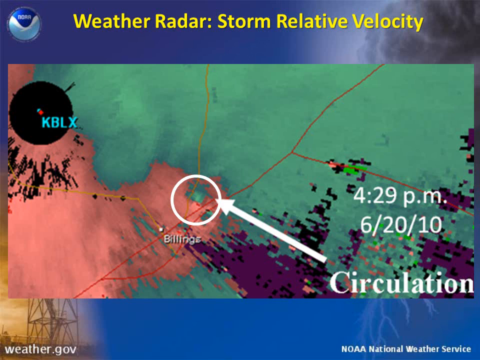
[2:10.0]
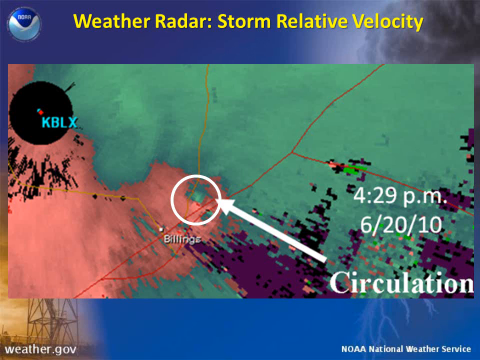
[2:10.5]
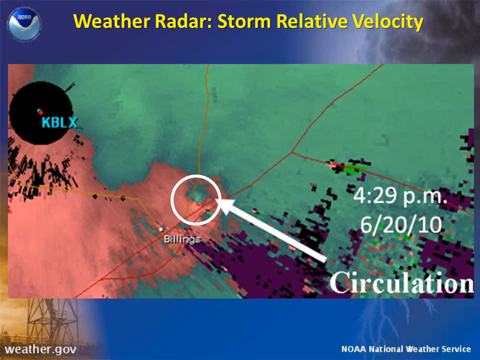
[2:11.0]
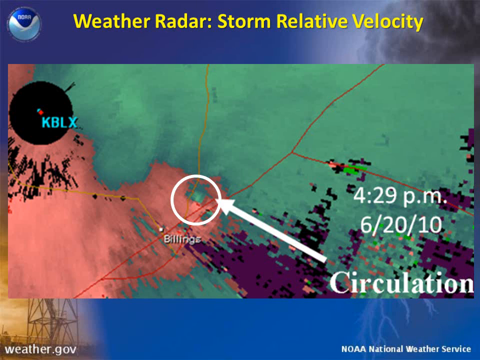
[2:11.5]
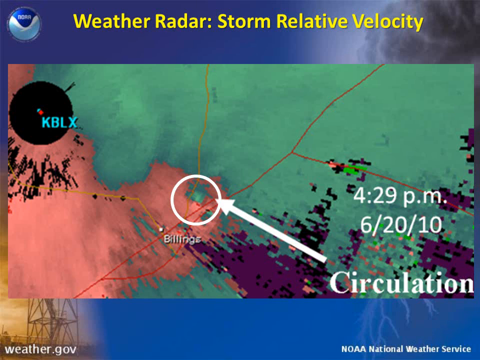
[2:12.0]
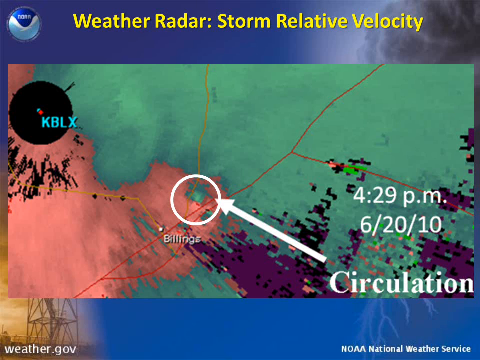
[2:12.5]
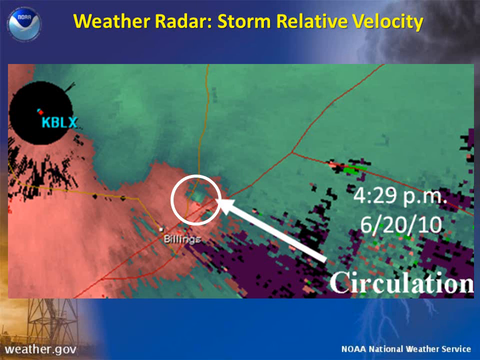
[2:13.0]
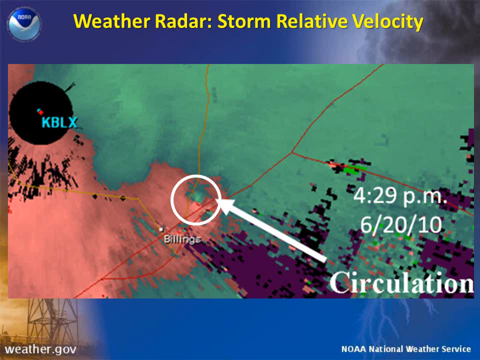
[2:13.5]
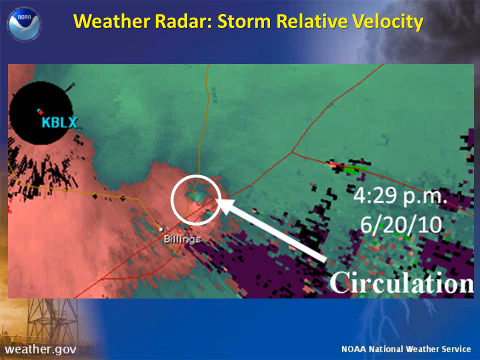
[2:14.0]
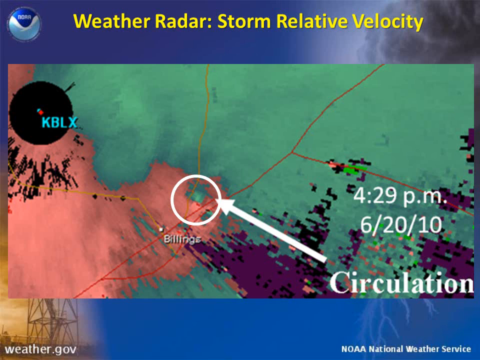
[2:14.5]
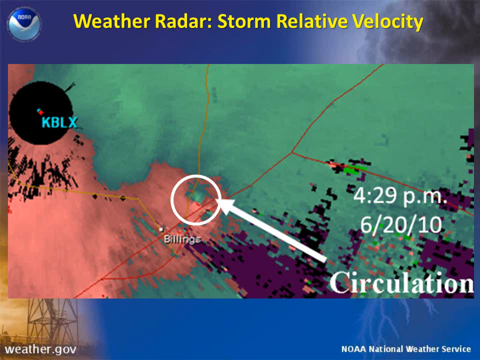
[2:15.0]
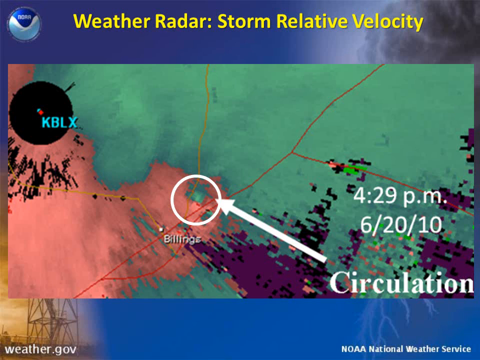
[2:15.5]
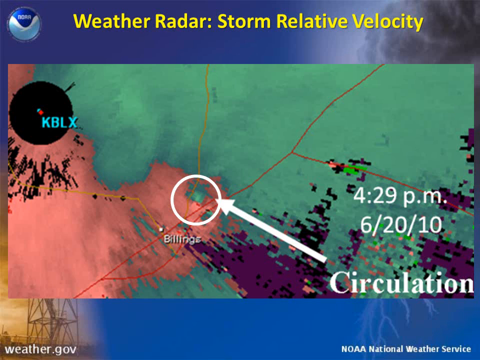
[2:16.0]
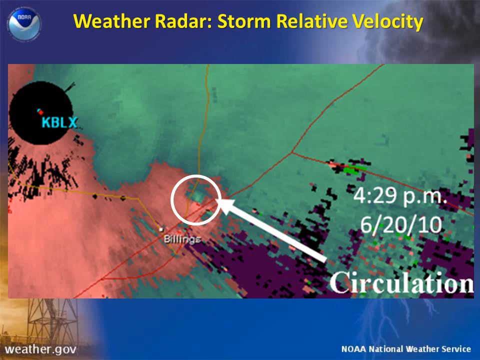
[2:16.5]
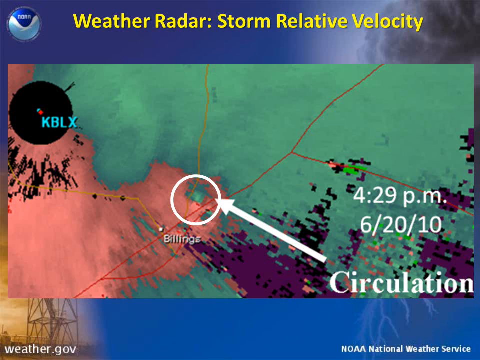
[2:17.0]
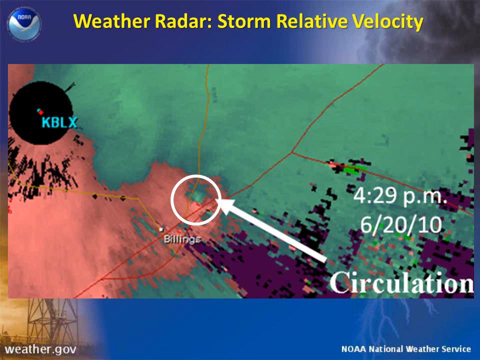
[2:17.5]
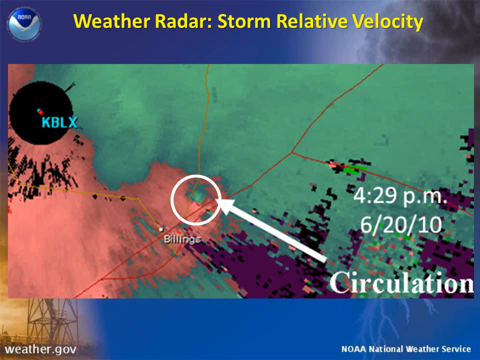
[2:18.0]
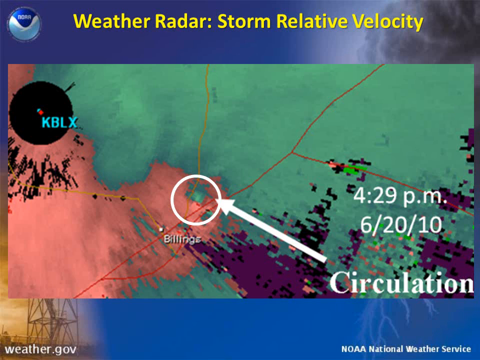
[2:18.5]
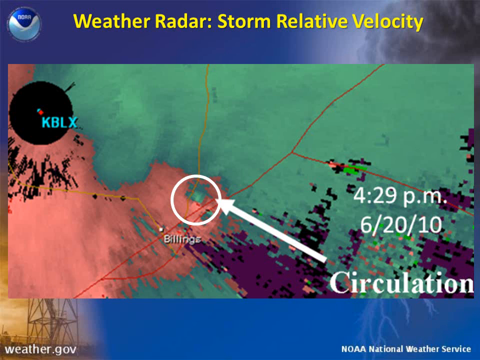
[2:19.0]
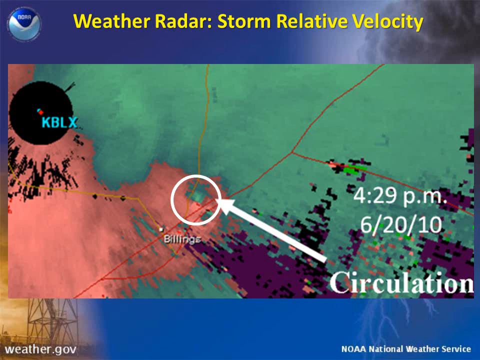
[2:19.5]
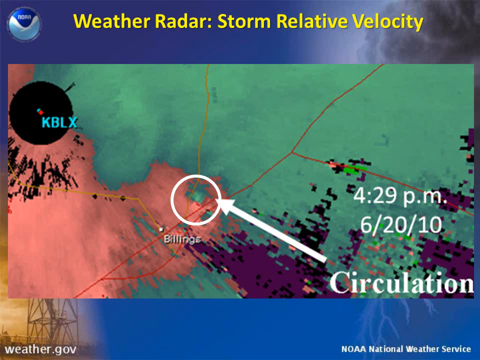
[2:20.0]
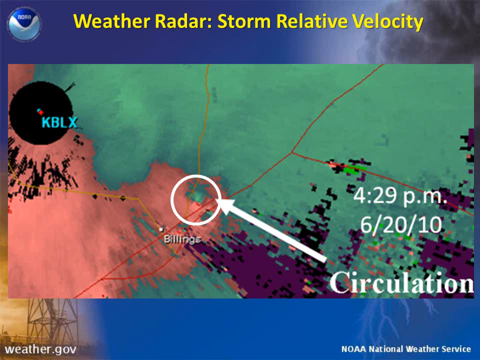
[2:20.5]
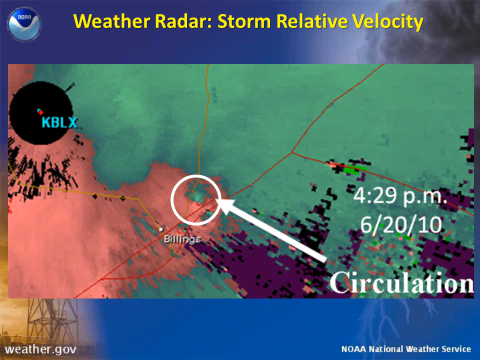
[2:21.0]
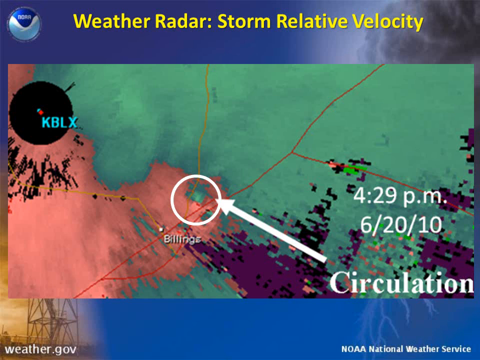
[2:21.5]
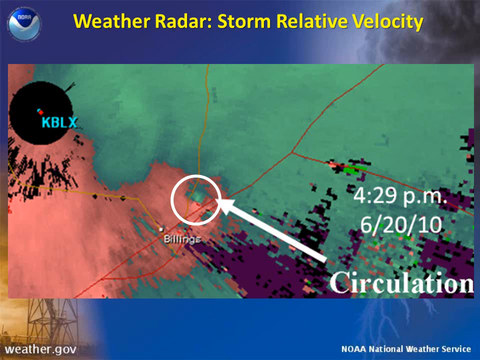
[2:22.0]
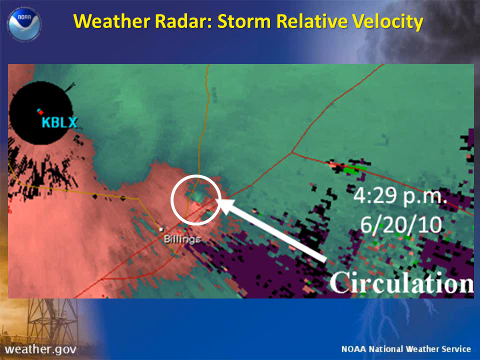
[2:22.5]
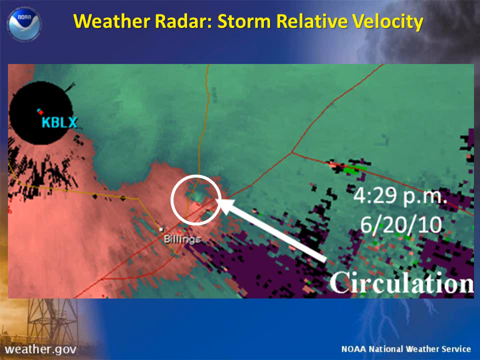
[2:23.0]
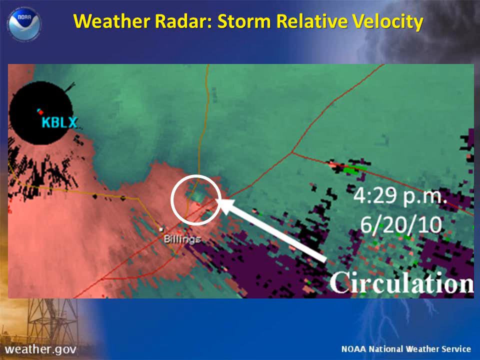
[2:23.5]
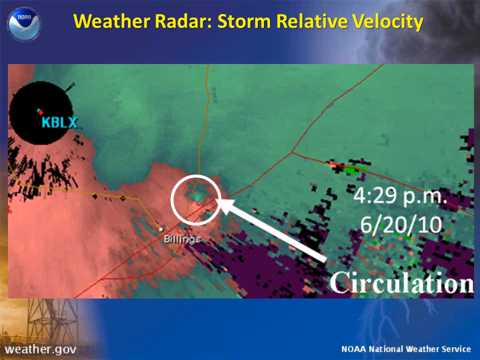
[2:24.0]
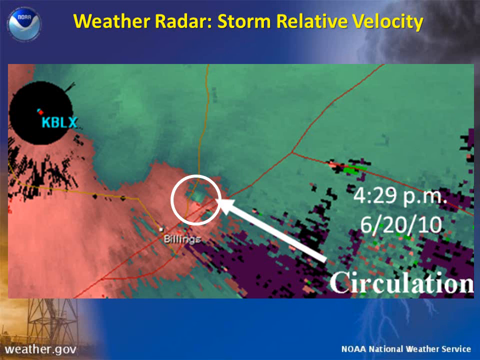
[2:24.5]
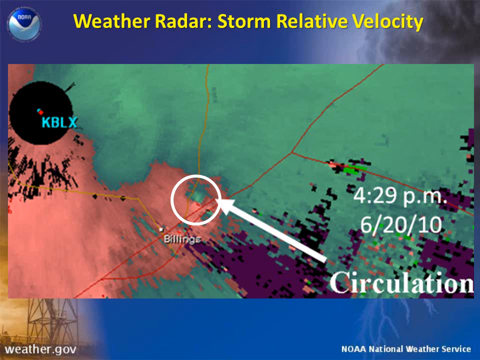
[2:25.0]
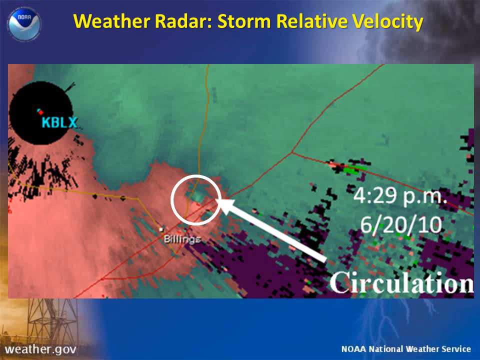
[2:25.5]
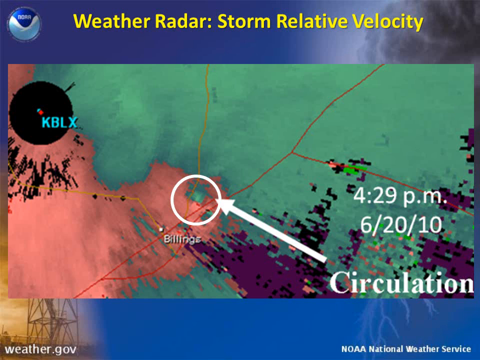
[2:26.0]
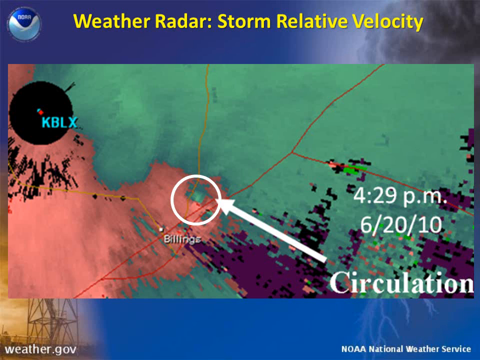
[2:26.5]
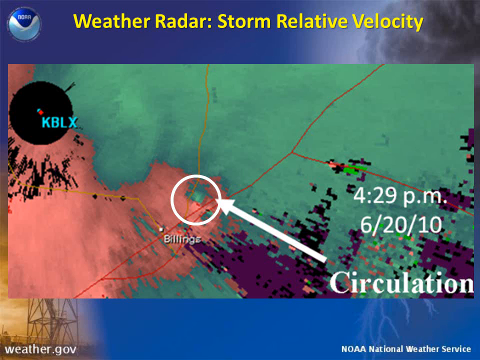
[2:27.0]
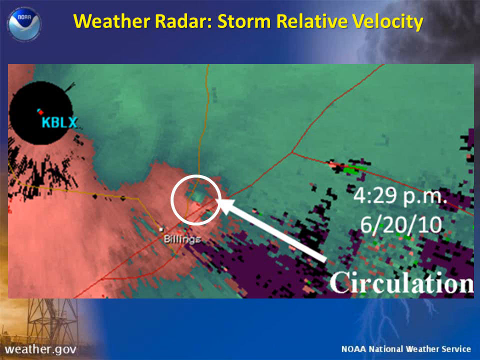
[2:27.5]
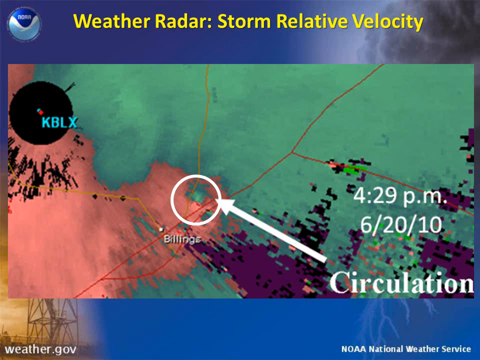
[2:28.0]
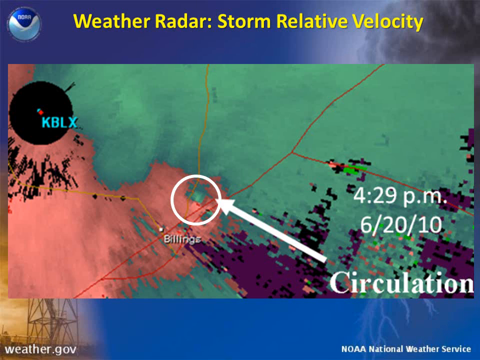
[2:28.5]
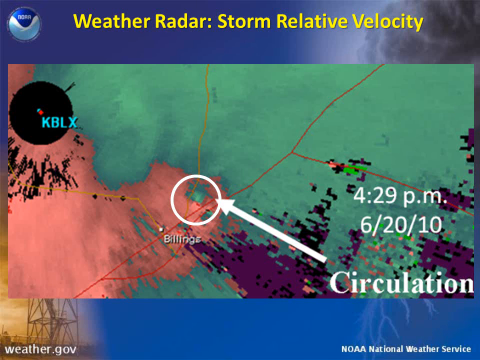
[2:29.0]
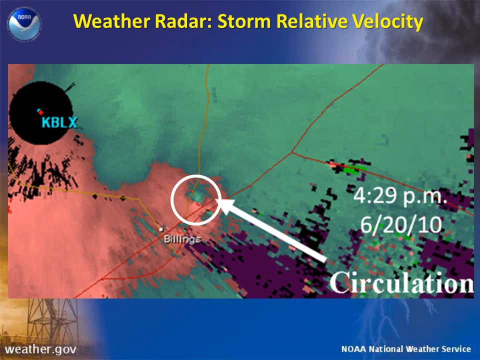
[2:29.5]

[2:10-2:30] A slide looks to be for a weather class. At the top, yellow text reads "weather radar: storm relative velocity," set against a kind of stylized weather background with a dark gradient blue and maybe some storm clouds in the top right corner. A circular logo in the top left is kind of blue, dark blue on top, with a slight U and a kind of wavy light blue underneath. A square weather radar image shows a large seafoam-type green area on the top right and in the middle, taking up maybe 60% of the image, with some purple patches on top of the green and a pinkish hue on the left side taking up maybe 30%. A hollow circle with a white outline is over a point towards the center of the square, with a white arrow pointing to it. The time and date are shown in white text: 4:29 PM and 6 2010. In the top left corner is a black circle with "KBLX" written in sort of a teal font and a red dot in the middle.